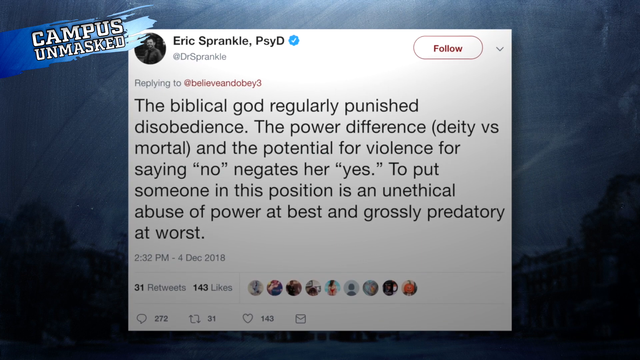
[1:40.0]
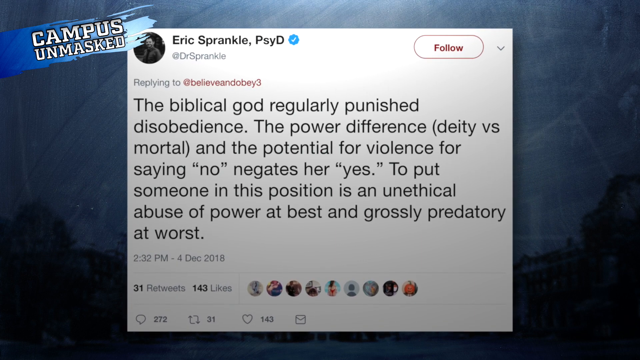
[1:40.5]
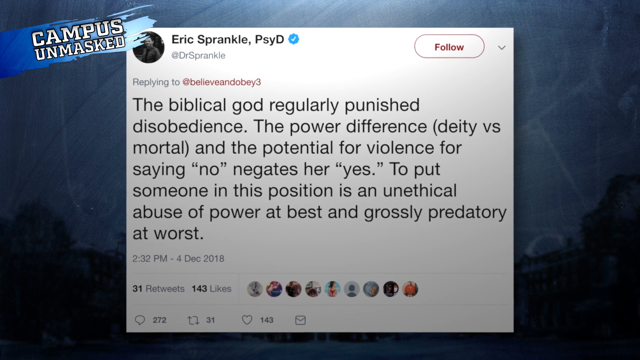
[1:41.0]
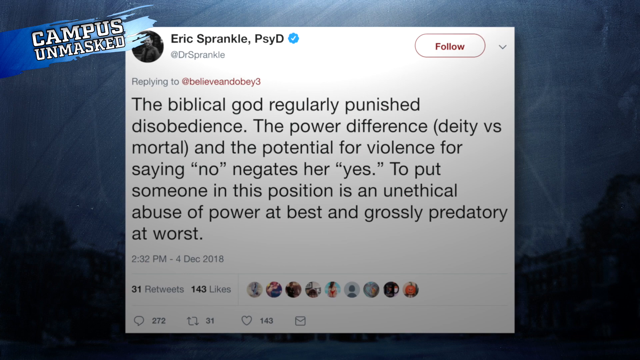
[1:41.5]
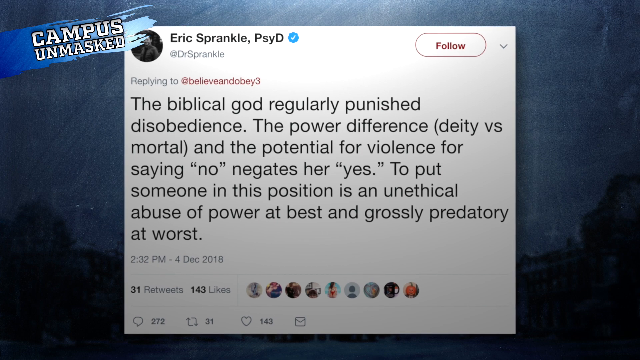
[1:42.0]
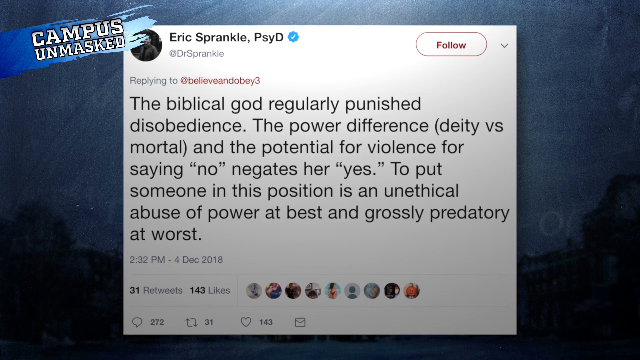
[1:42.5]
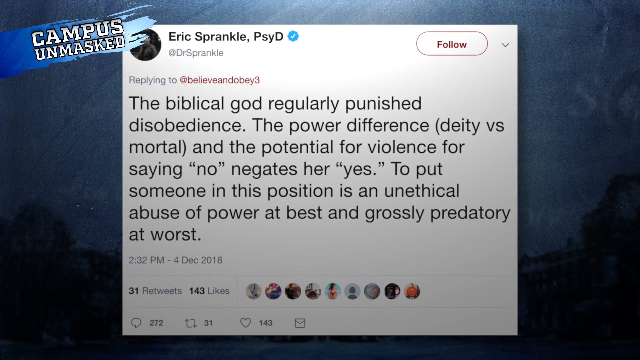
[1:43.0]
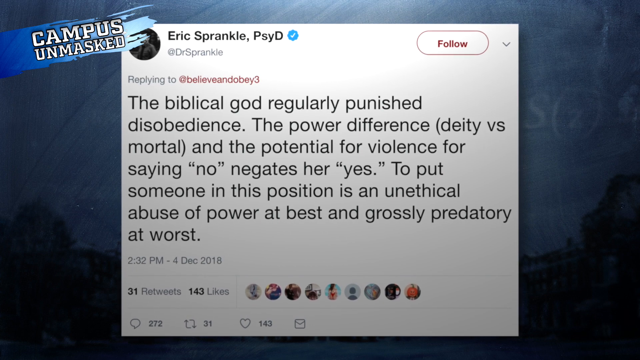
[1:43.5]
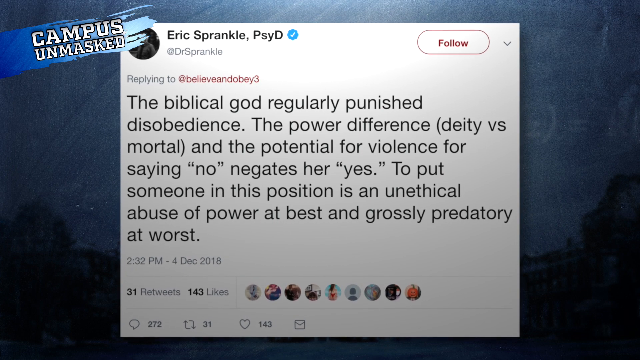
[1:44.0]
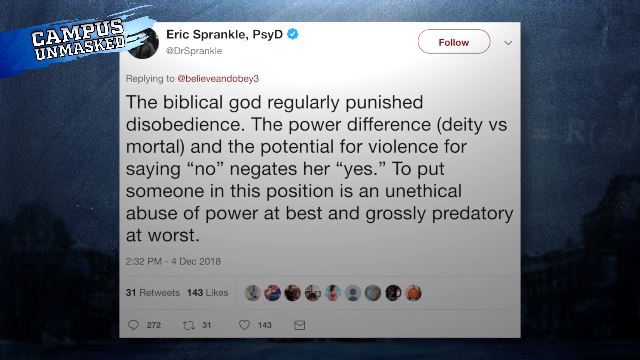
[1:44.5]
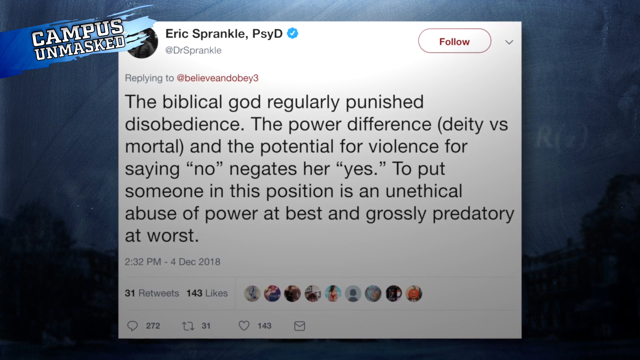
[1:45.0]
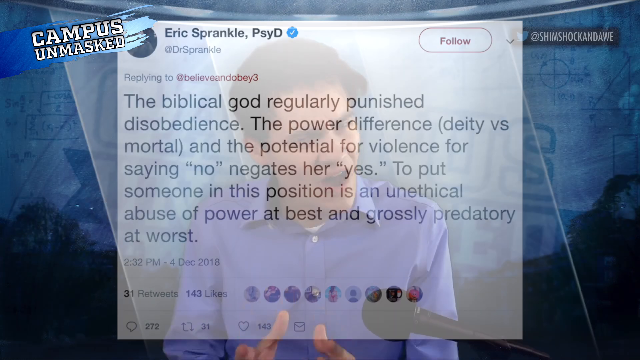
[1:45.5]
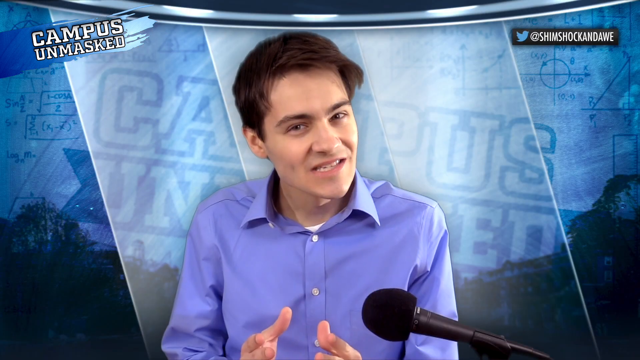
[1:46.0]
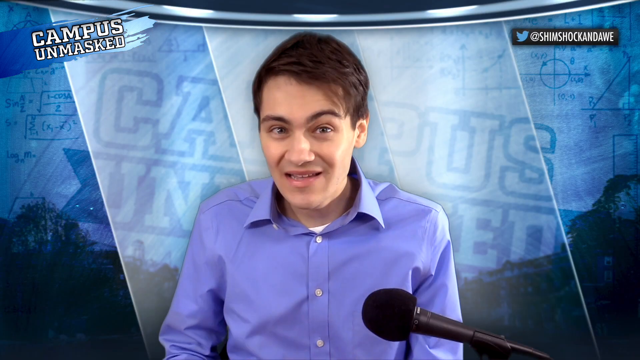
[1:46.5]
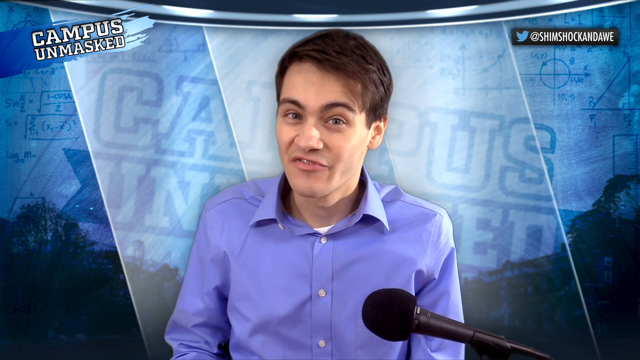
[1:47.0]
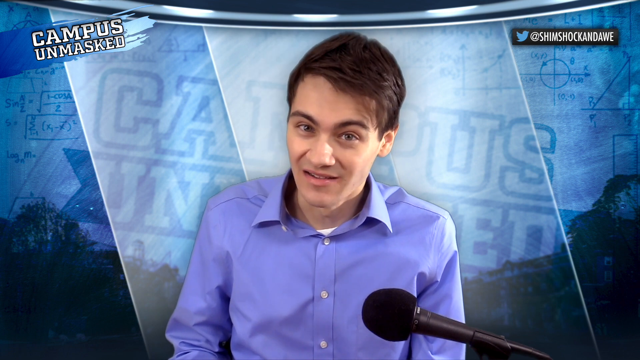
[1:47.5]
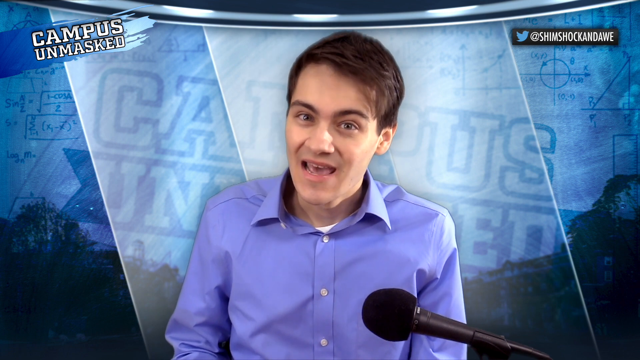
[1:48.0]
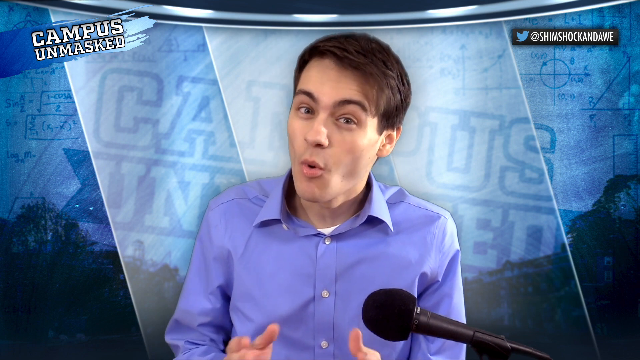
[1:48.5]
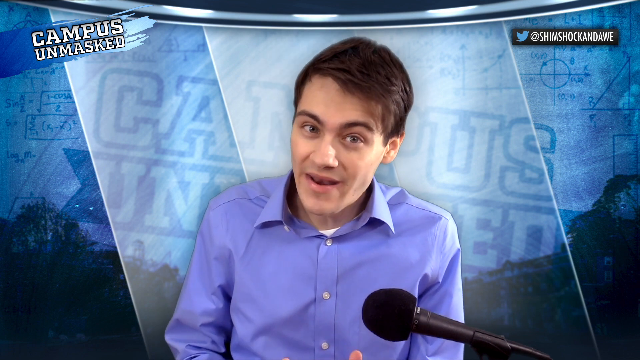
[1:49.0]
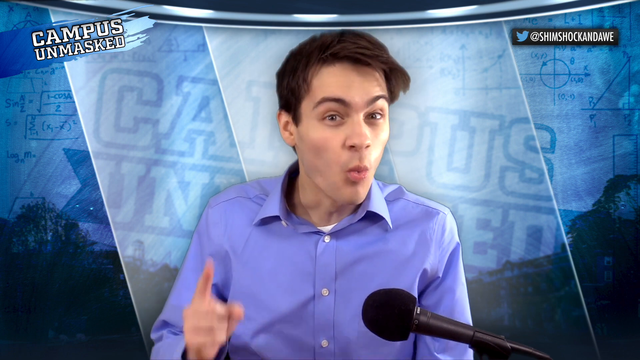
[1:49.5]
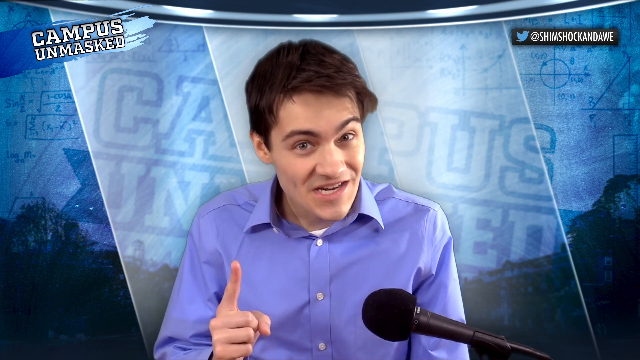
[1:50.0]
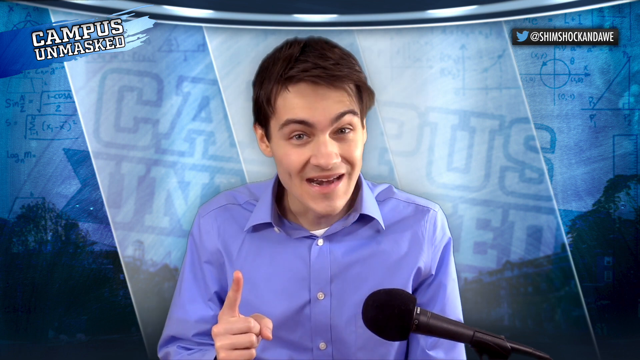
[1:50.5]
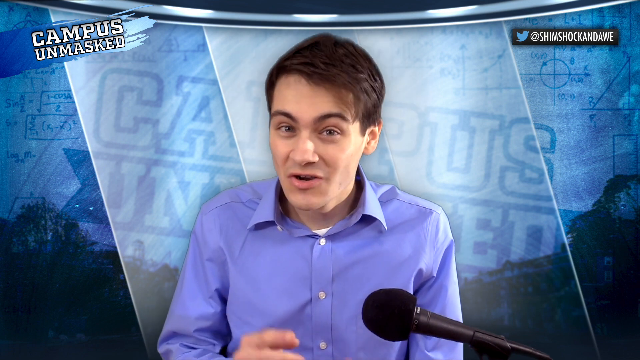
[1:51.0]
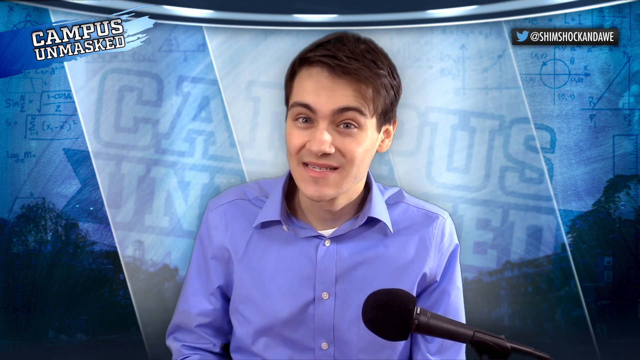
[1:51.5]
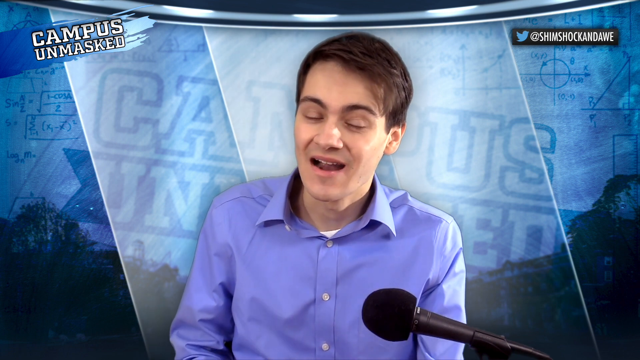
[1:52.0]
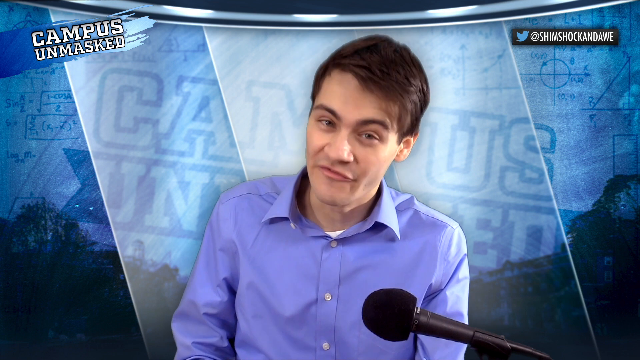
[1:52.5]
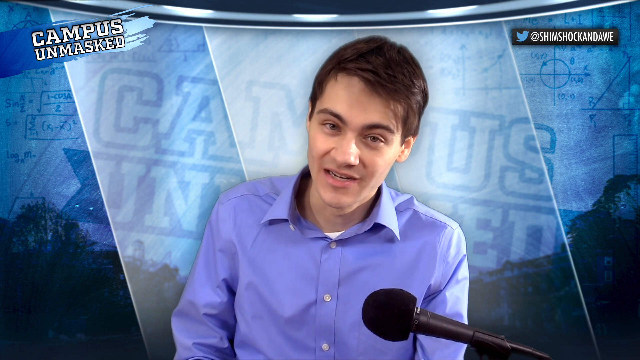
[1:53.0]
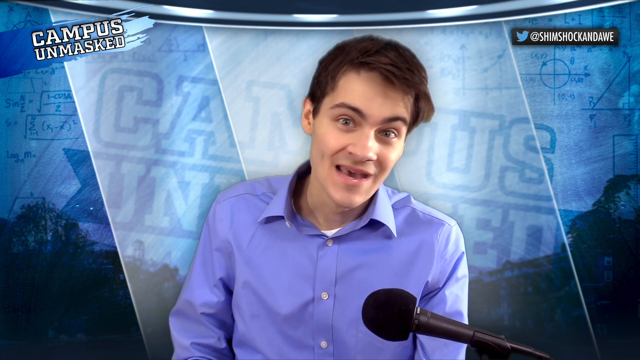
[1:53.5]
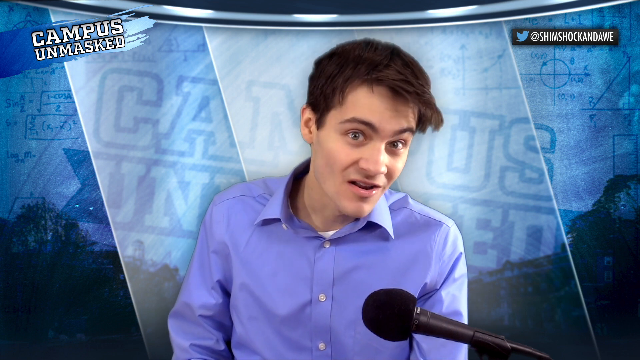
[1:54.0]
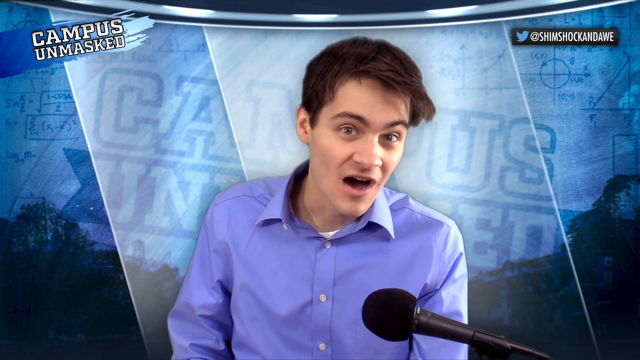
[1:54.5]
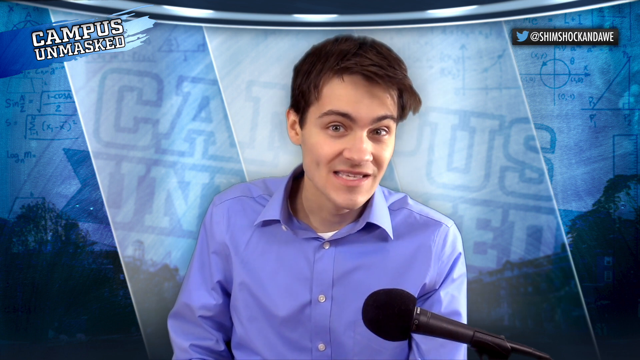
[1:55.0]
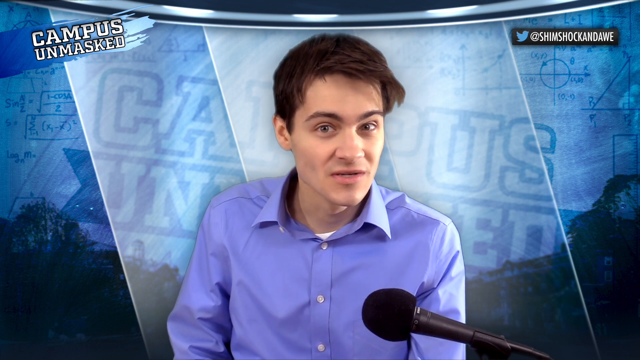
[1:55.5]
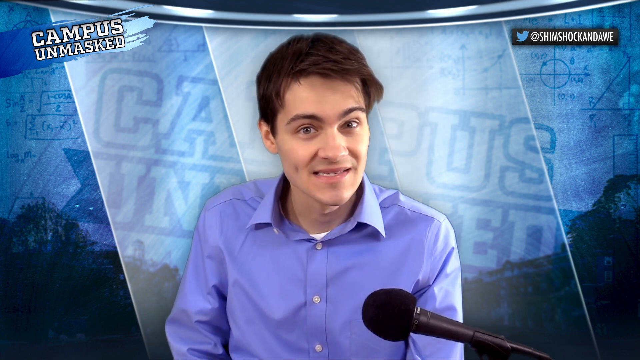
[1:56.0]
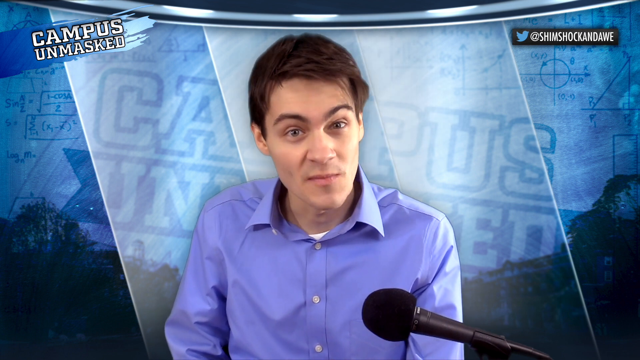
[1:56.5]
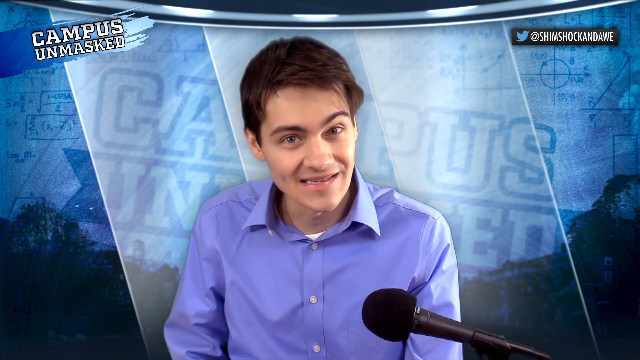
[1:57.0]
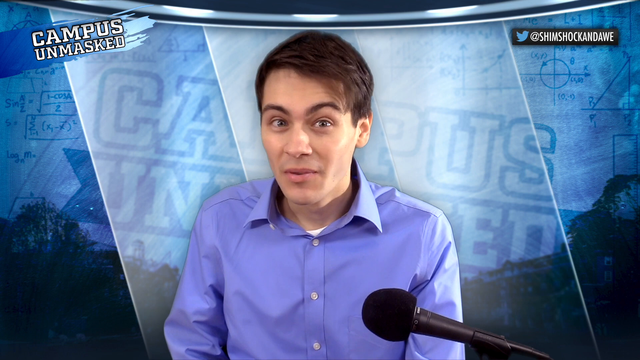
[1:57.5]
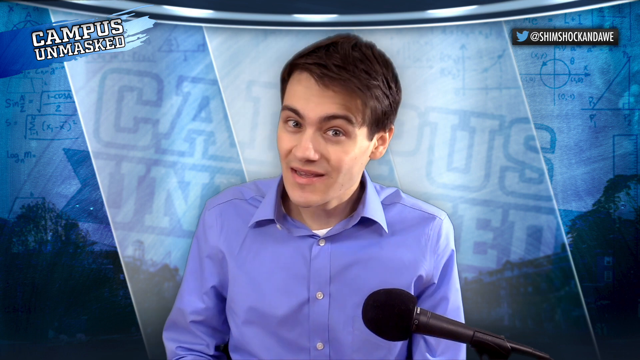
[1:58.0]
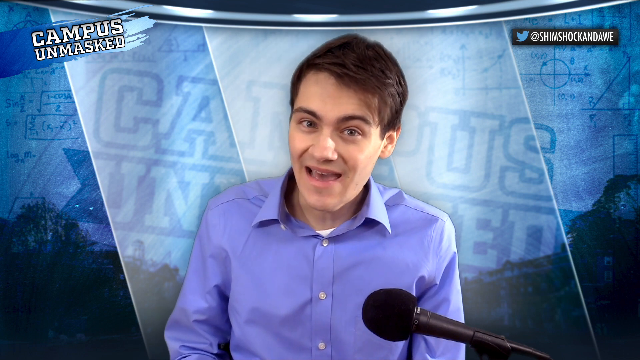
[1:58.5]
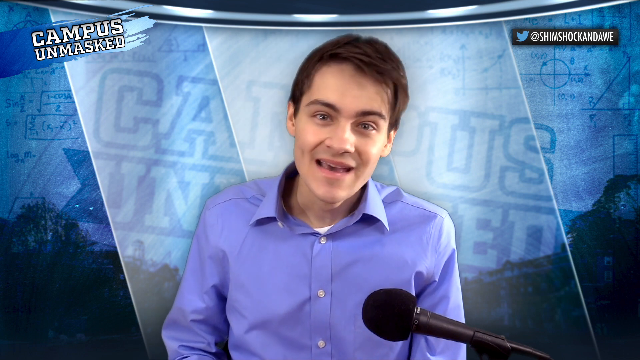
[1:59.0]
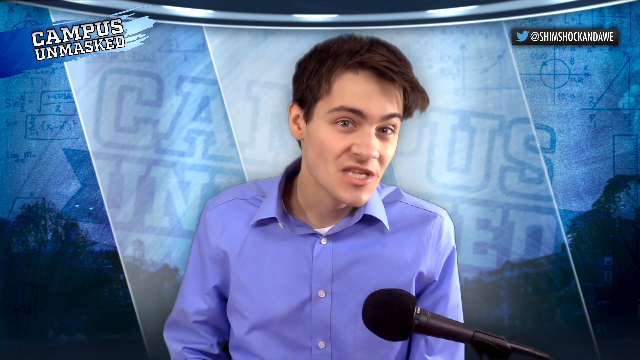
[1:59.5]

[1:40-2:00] Rob Shimshock appears to be a very conservative teenager. A follow-up tweet from Eric Sprankle reads "the biblical God regularly punished disobedience. The power difference, deity versus mortal, and the potential for violence for saying no negates her yes. To put someone in this position is an unethical abuse of power at best, and grossly predatory at worst." The tweet is in front of the campus picture, not the background behind Rob Shimshock.